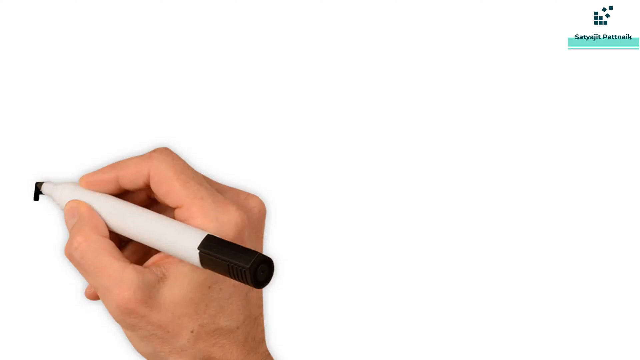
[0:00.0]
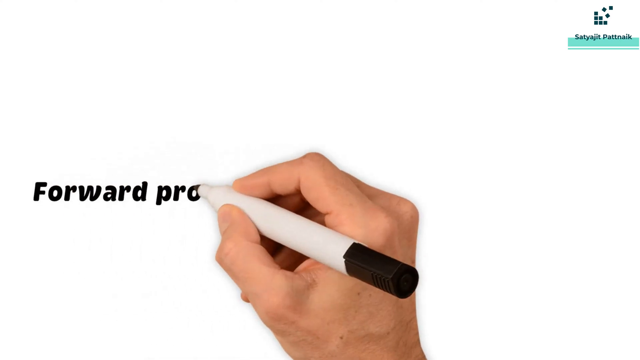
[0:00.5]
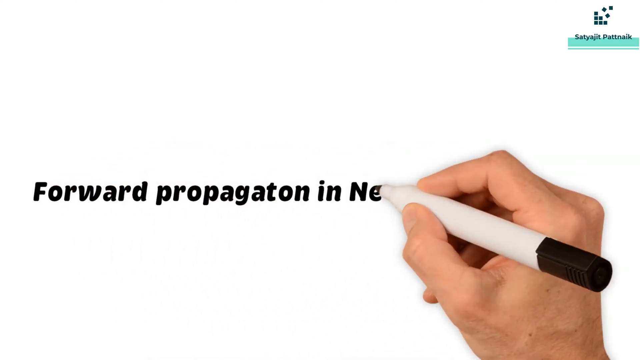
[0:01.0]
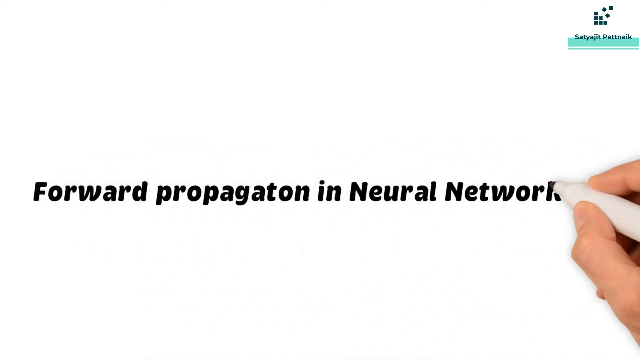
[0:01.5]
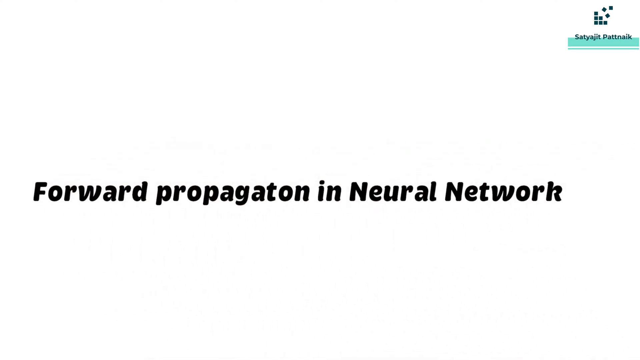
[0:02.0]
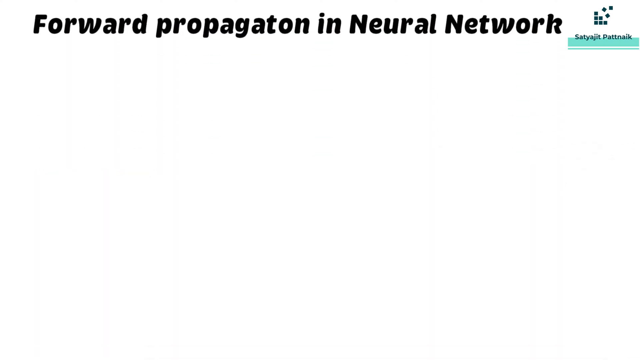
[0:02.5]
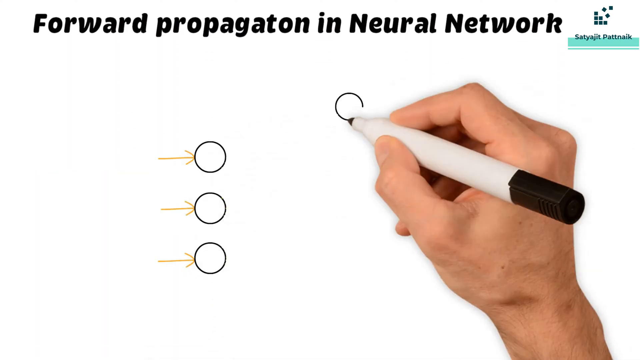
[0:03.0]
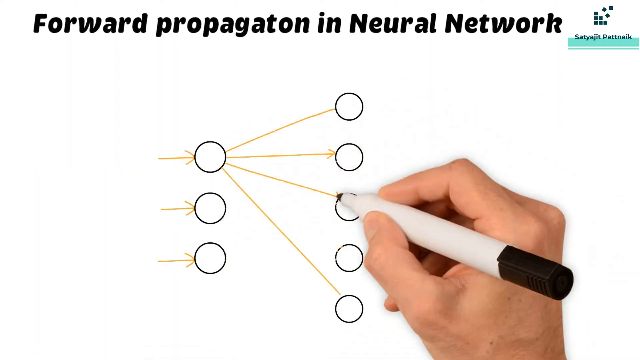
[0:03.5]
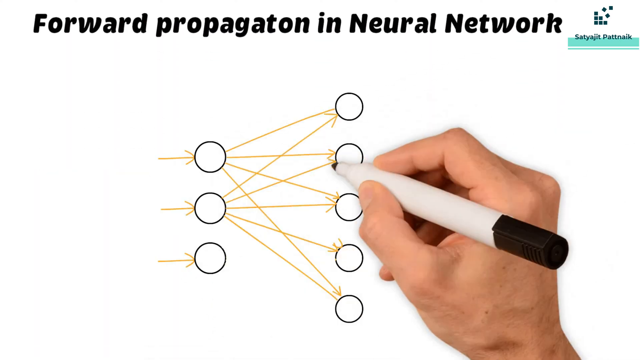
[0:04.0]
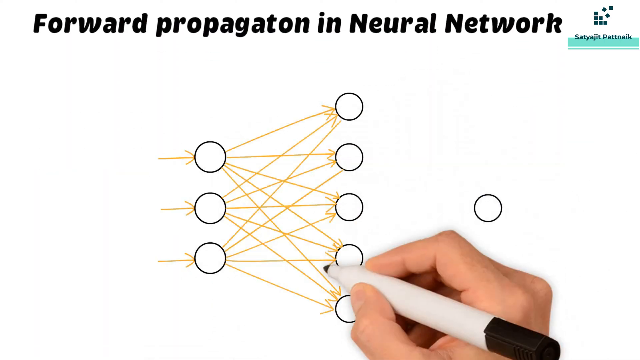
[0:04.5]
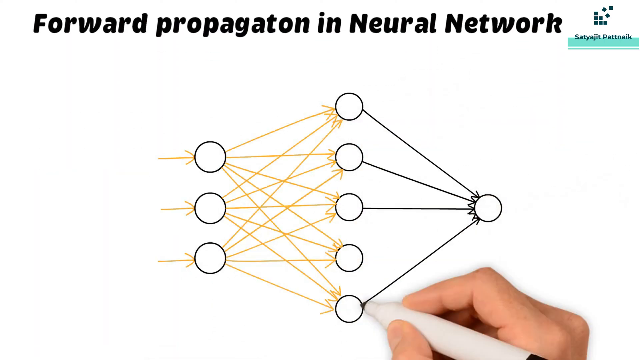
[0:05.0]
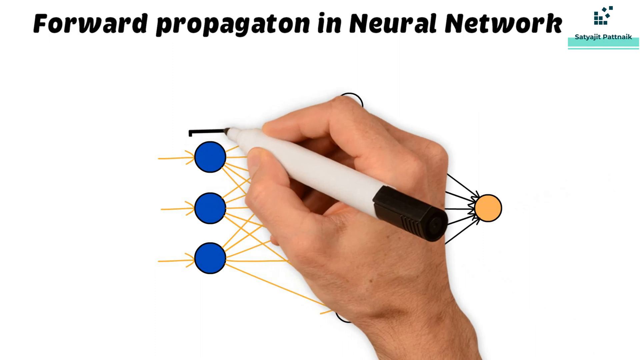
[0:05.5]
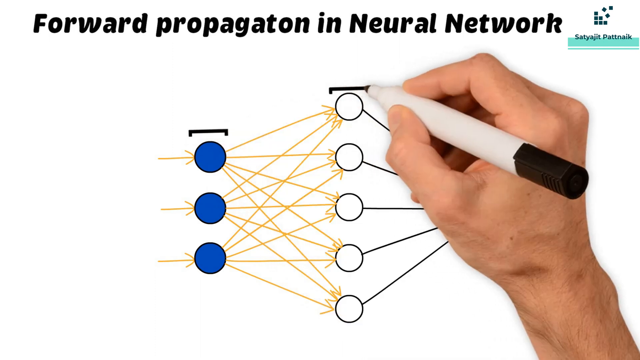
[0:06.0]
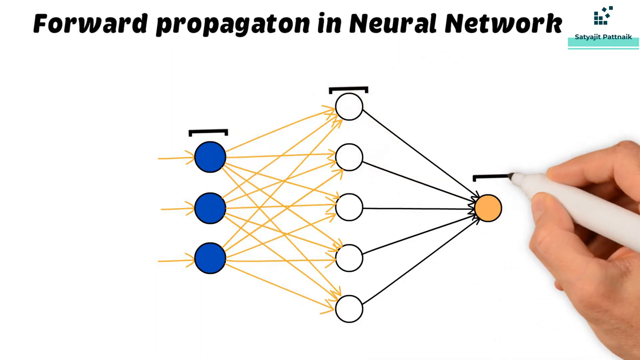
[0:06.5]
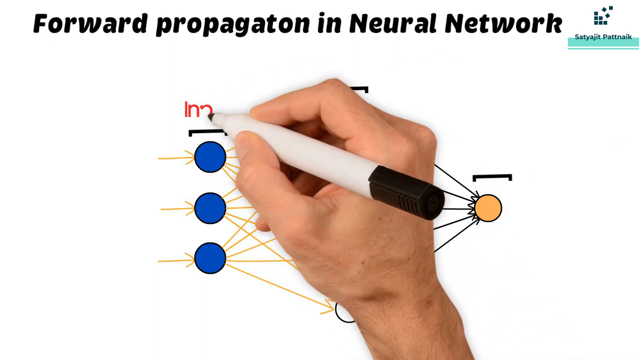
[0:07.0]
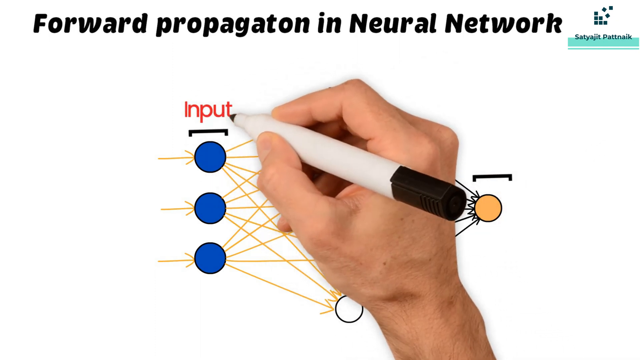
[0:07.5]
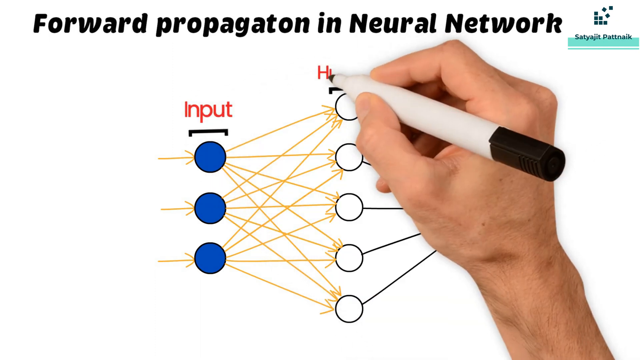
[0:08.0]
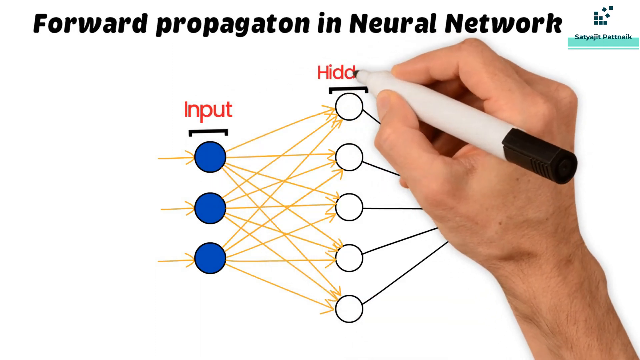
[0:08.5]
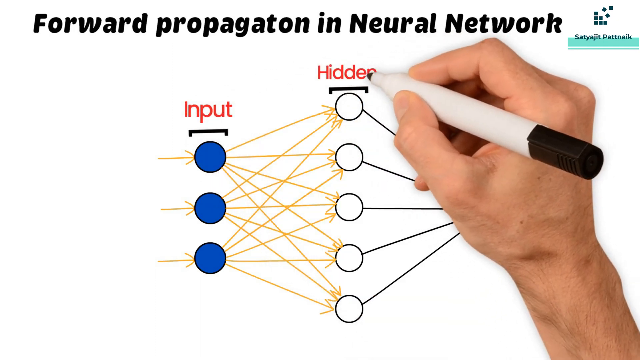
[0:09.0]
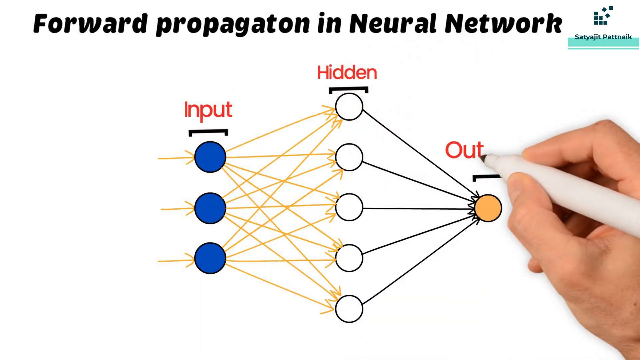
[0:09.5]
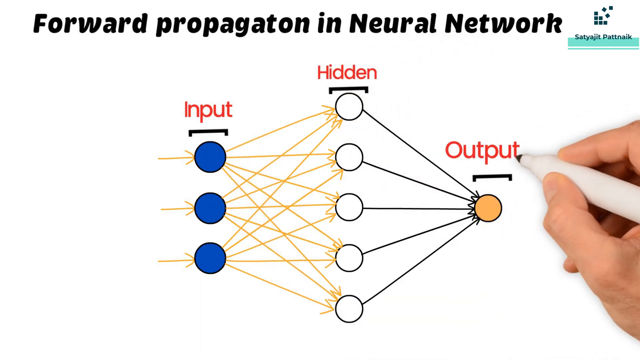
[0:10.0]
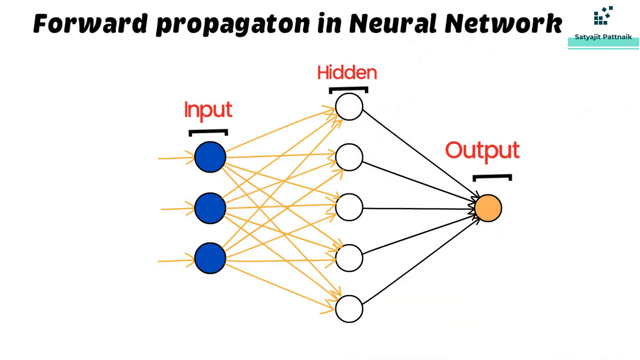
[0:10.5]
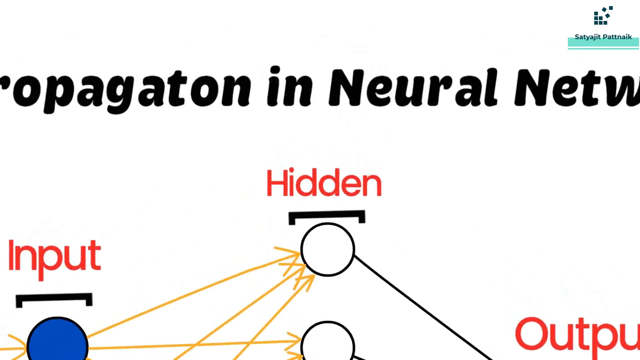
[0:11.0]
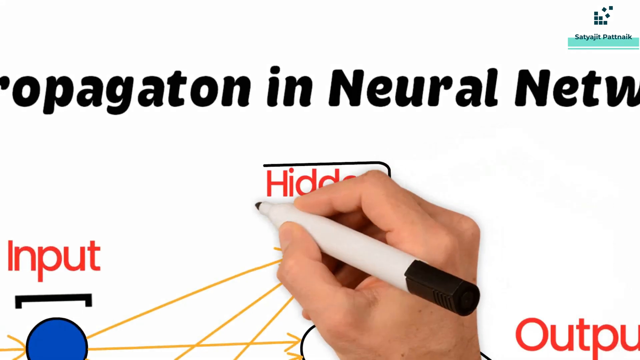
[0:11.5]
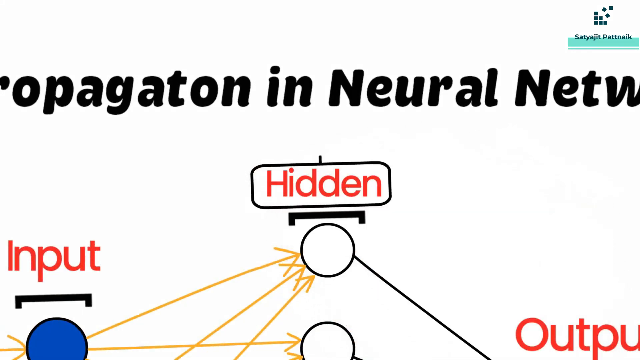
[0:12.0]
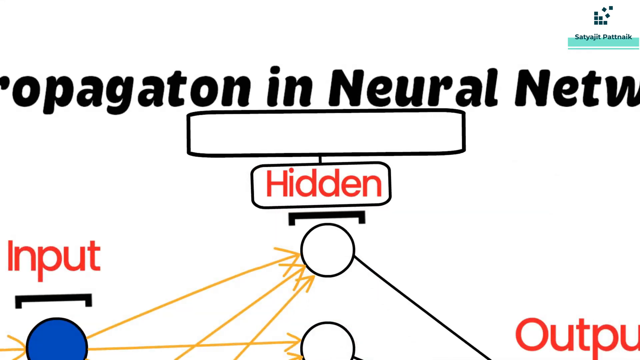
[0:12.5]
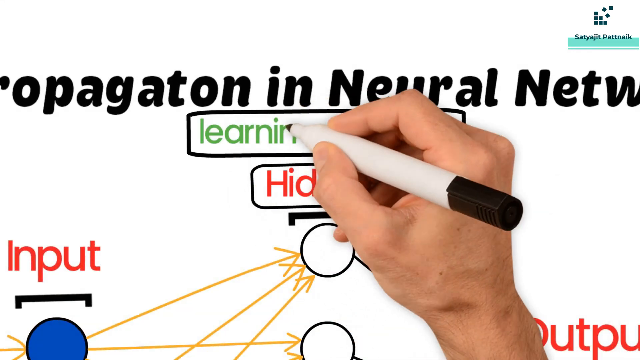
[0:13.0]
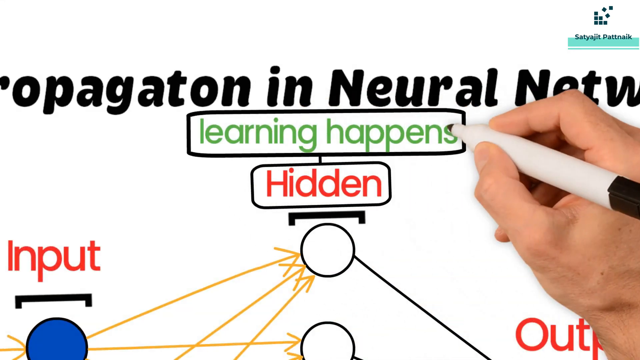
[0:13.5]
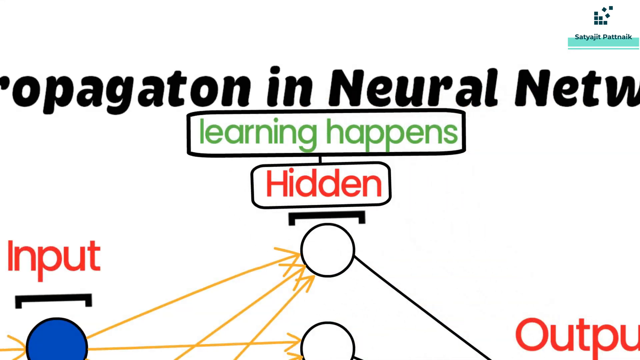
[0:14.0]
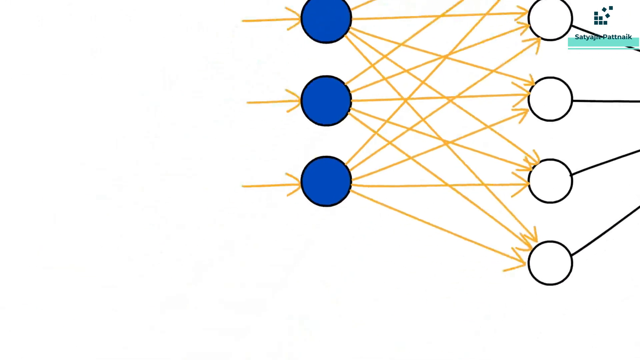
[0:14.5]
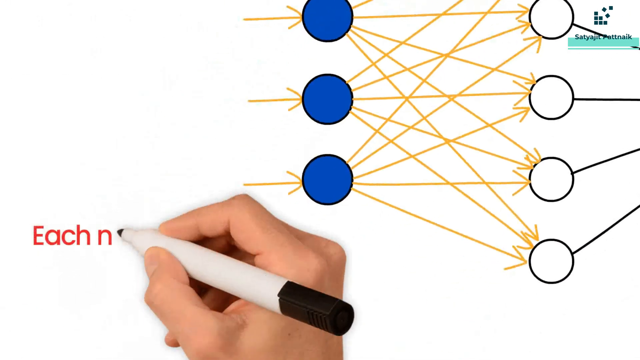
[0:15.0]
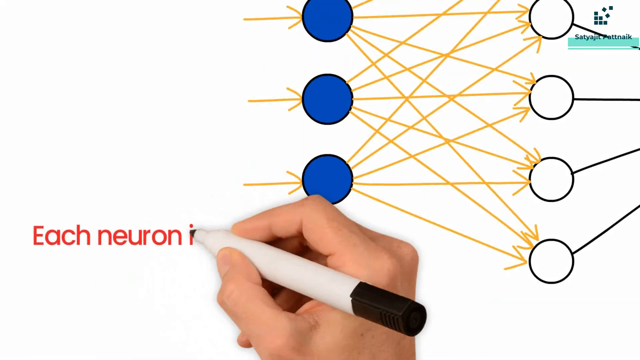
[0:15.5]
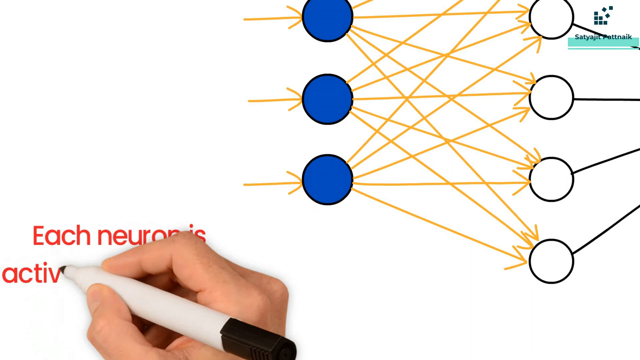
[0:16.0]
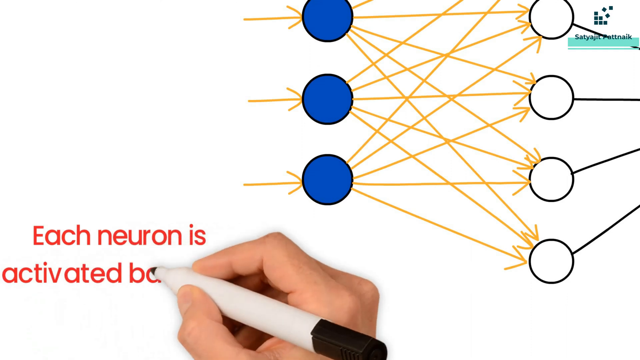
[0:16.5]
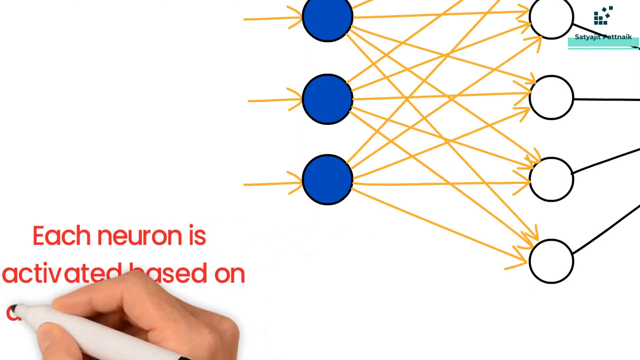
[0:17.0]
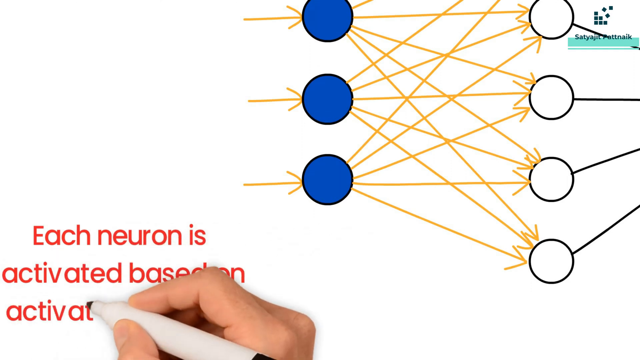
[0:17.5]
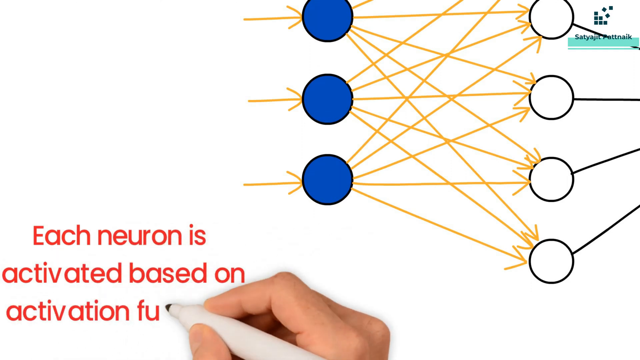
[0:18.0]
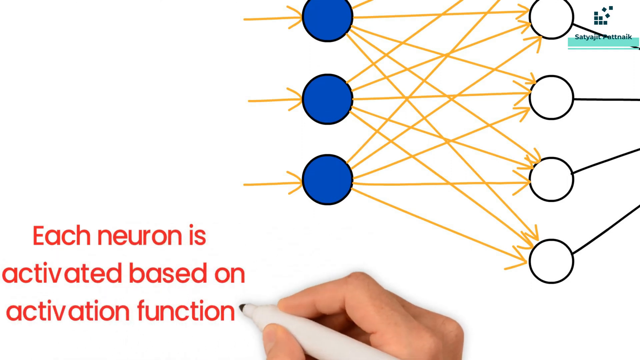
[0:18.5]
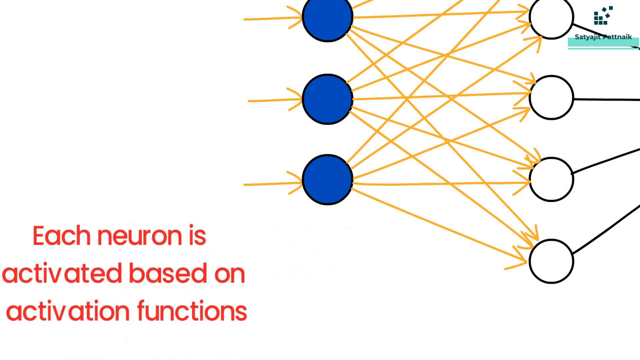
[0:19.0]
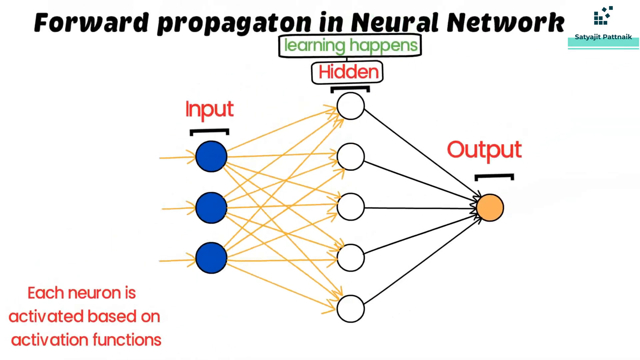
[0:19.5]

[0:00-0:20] A hand, belonging to a white person and probably male, writes what is probably a tutorial on forward propagation in neural networks. Various circles are drawn and labeled output, hidden and input. In the far top right there is a slogan that is not very clear to read, apparently about the company or program teaching these tutorials. The output circles are orange and the input circles are blue; the person uses various colors, perhaps to make the topics easy to tell apart.